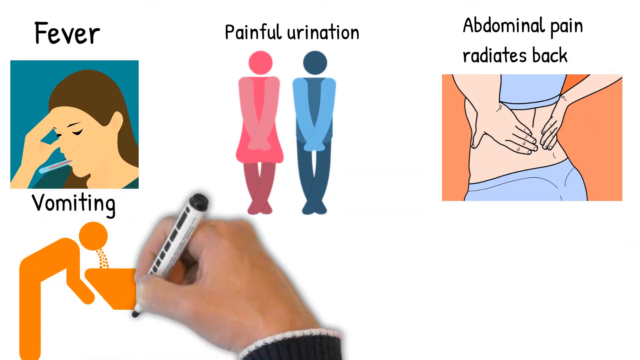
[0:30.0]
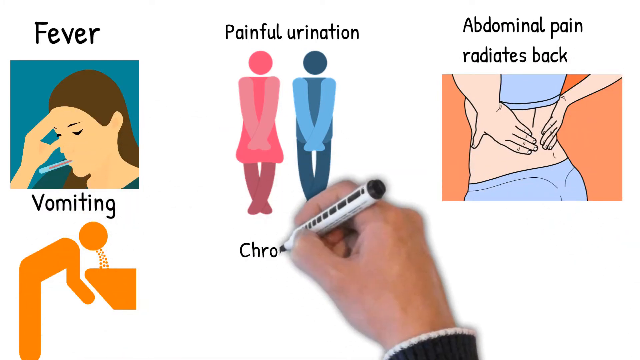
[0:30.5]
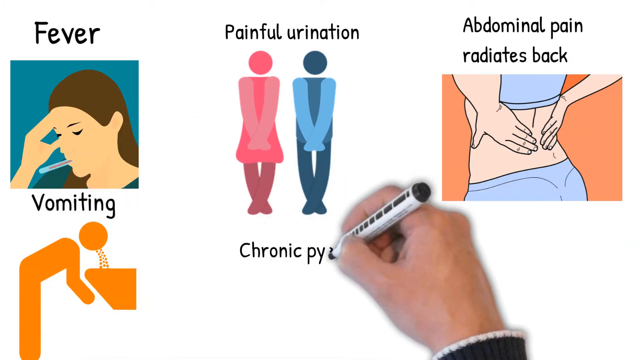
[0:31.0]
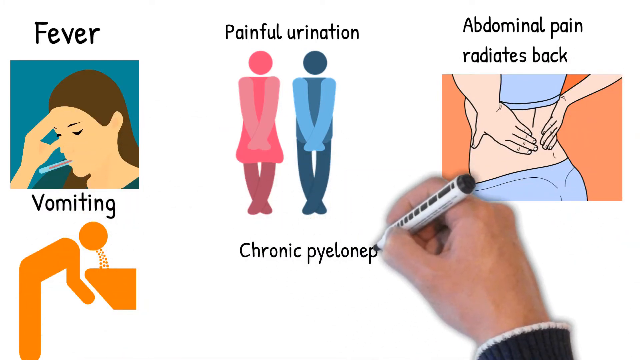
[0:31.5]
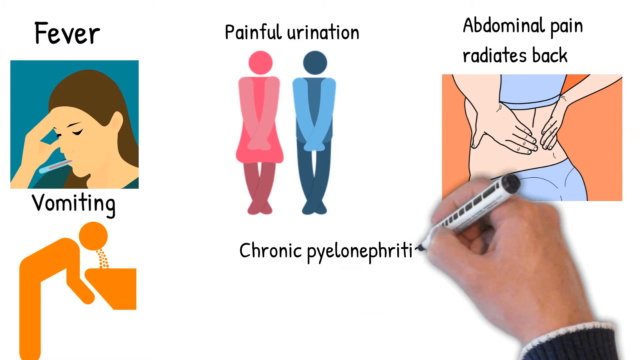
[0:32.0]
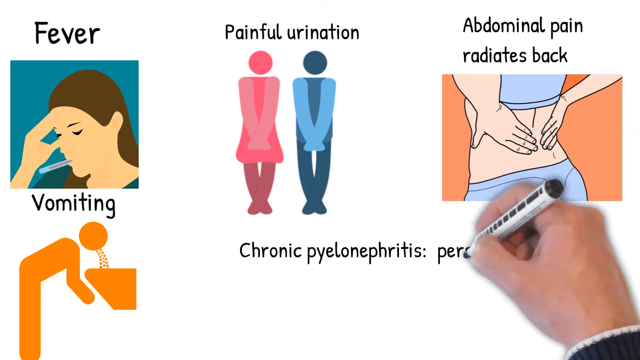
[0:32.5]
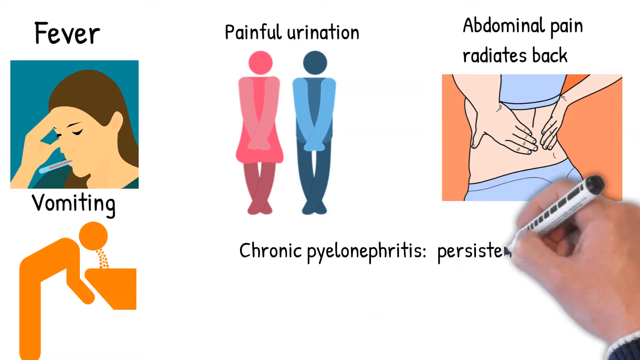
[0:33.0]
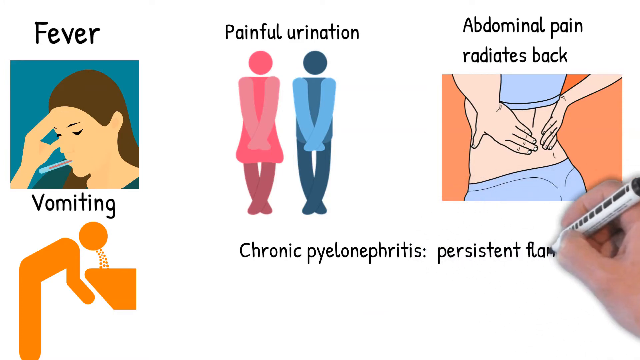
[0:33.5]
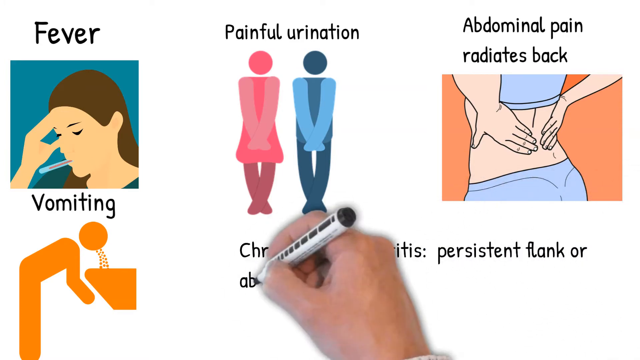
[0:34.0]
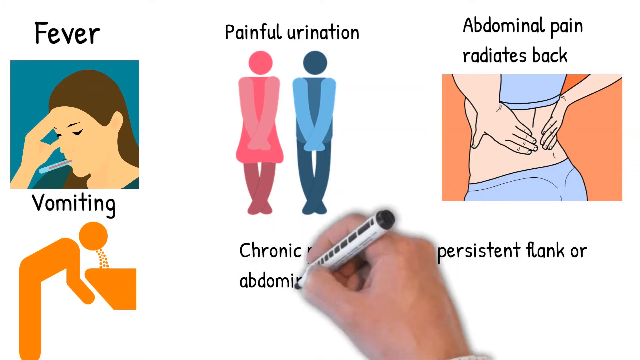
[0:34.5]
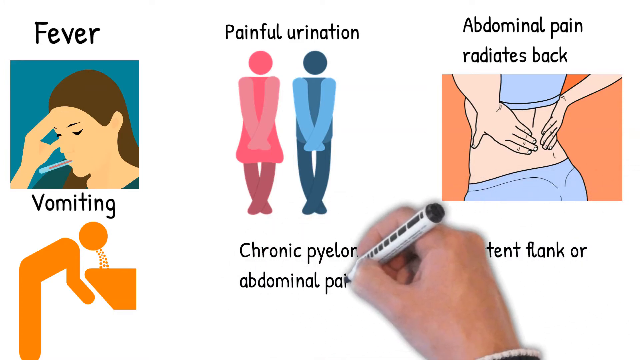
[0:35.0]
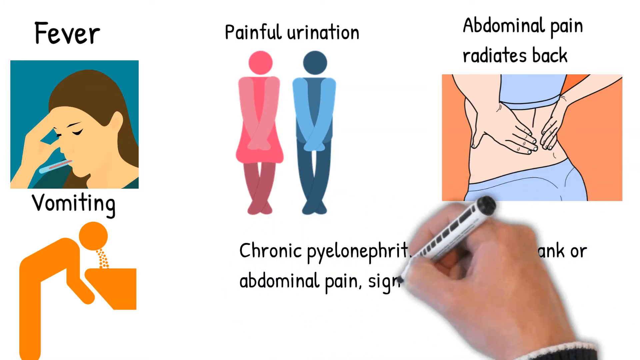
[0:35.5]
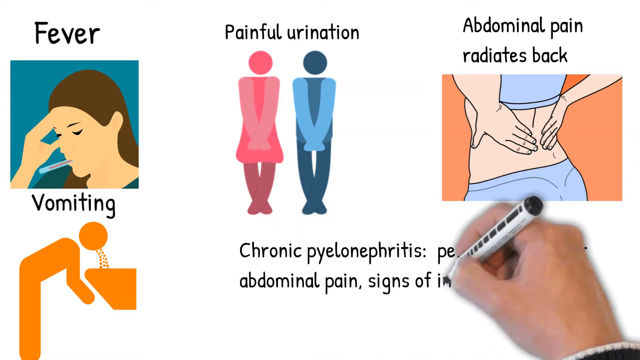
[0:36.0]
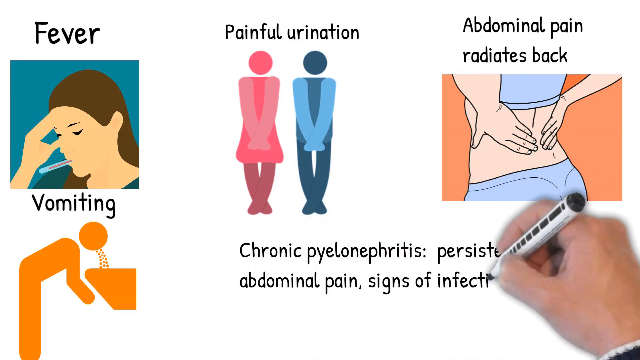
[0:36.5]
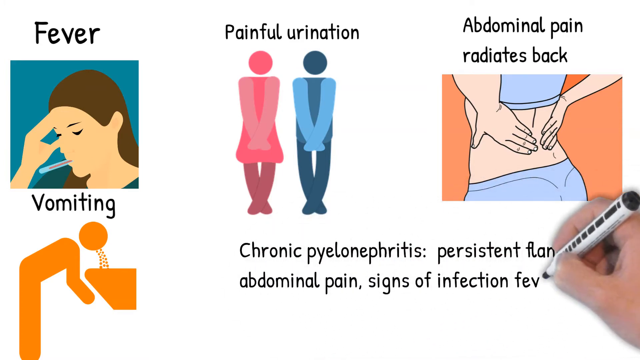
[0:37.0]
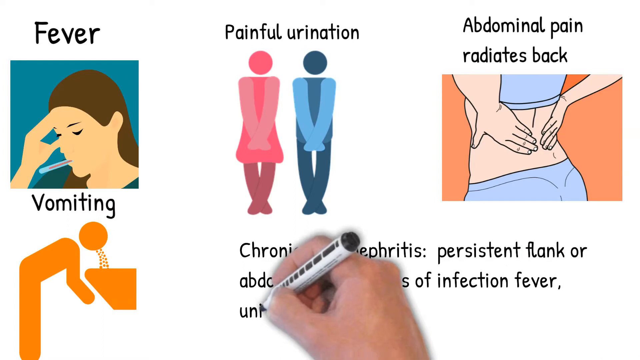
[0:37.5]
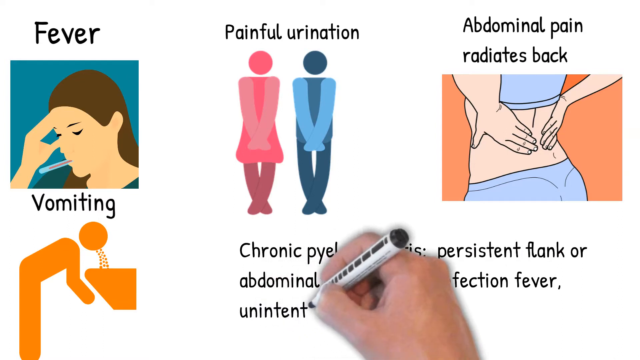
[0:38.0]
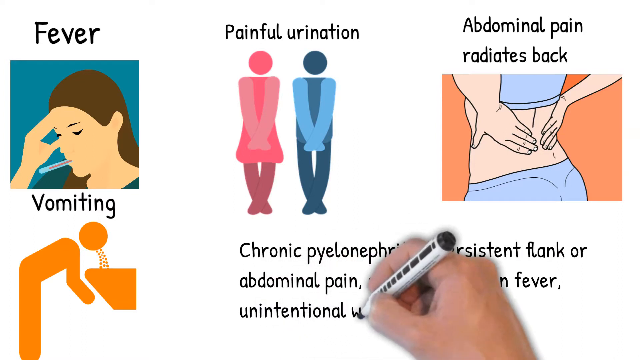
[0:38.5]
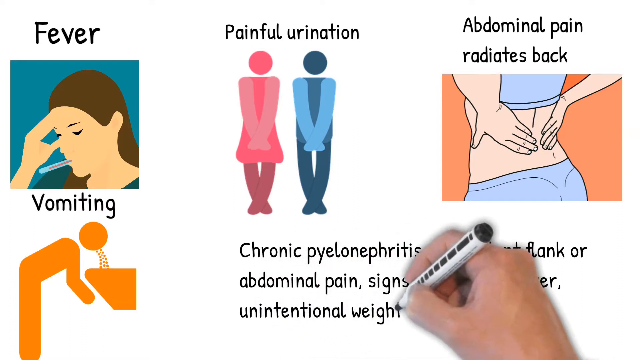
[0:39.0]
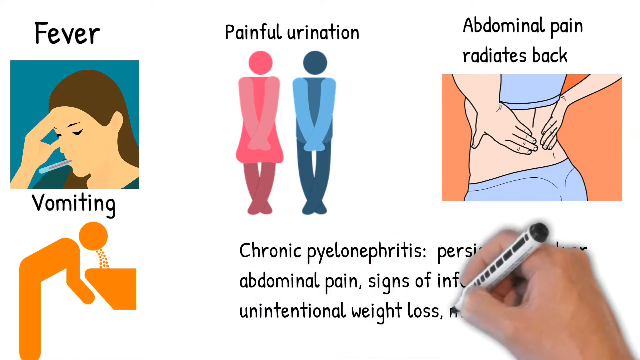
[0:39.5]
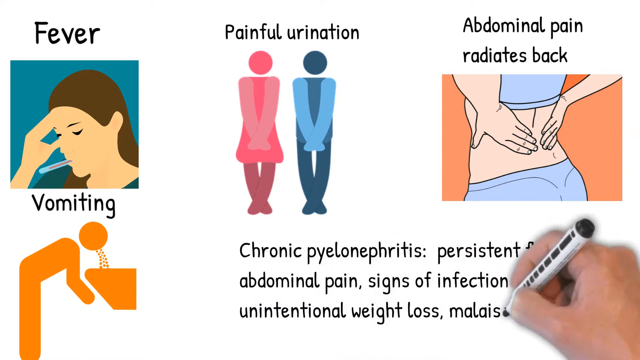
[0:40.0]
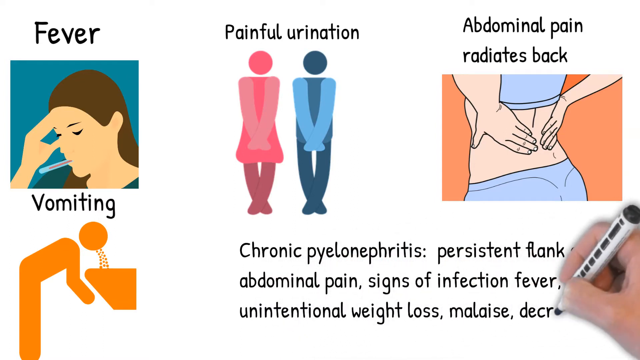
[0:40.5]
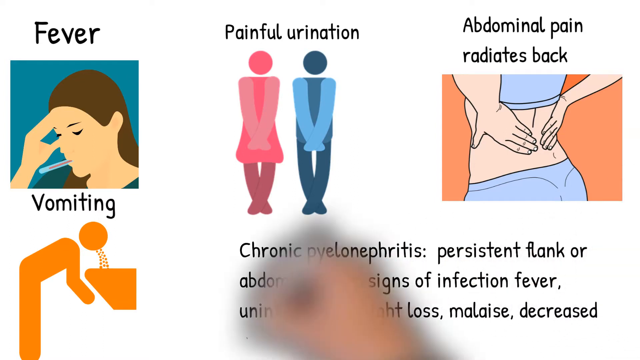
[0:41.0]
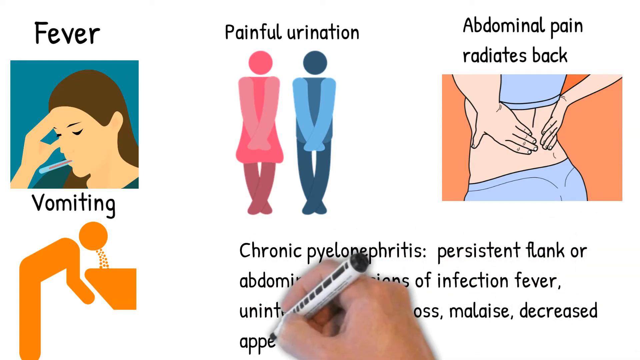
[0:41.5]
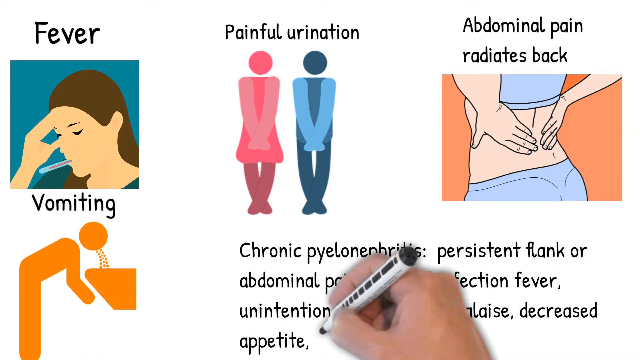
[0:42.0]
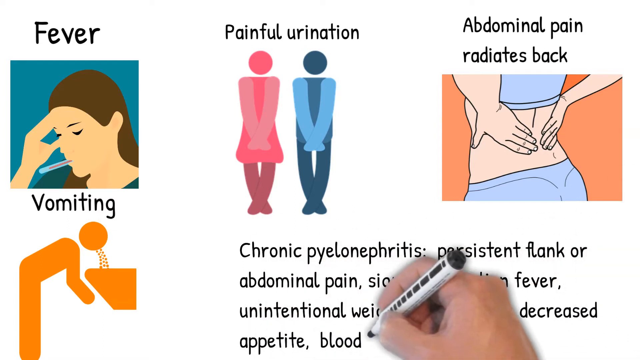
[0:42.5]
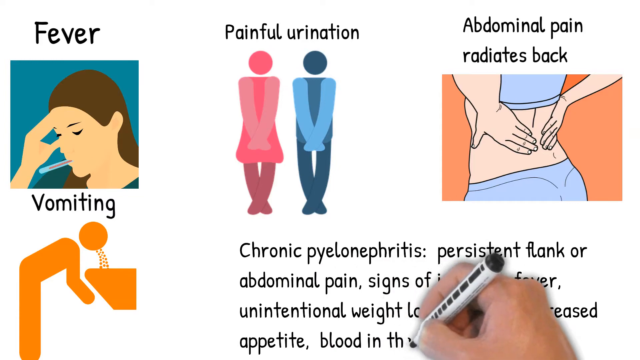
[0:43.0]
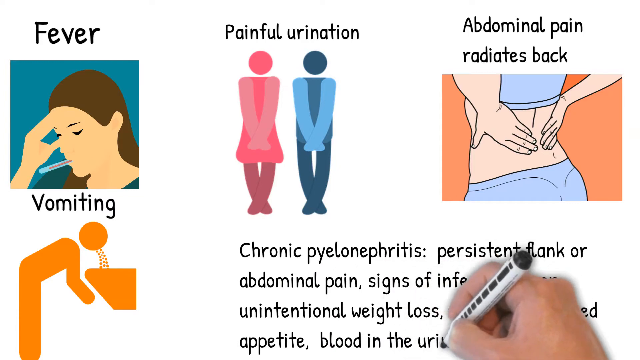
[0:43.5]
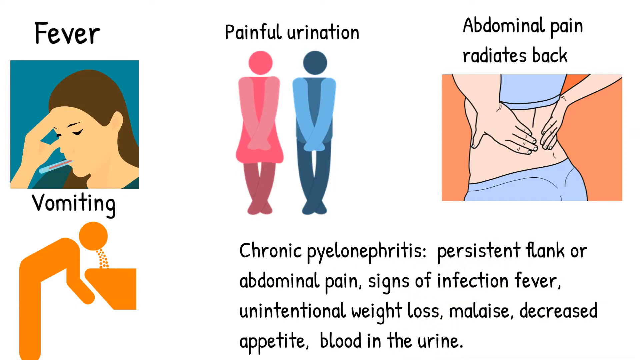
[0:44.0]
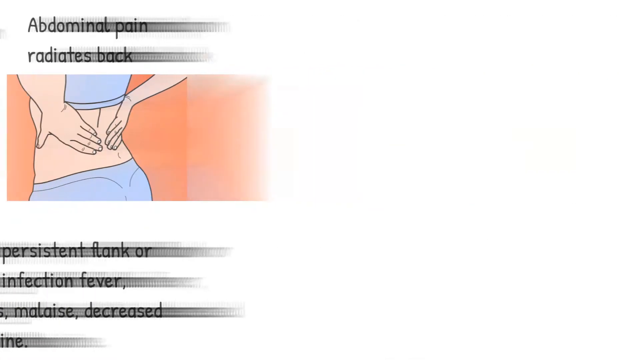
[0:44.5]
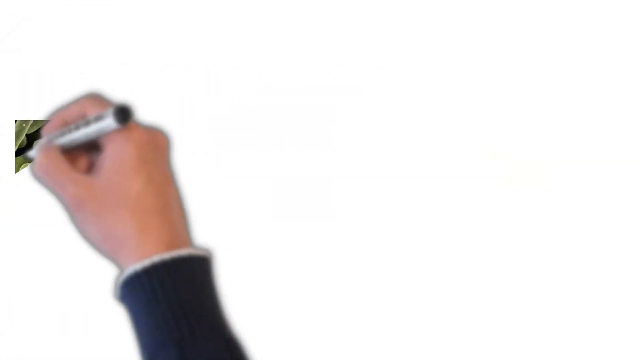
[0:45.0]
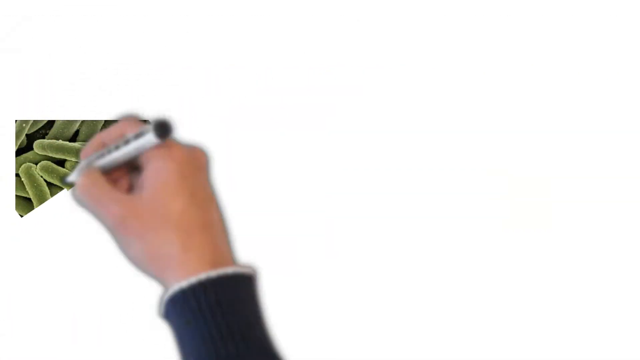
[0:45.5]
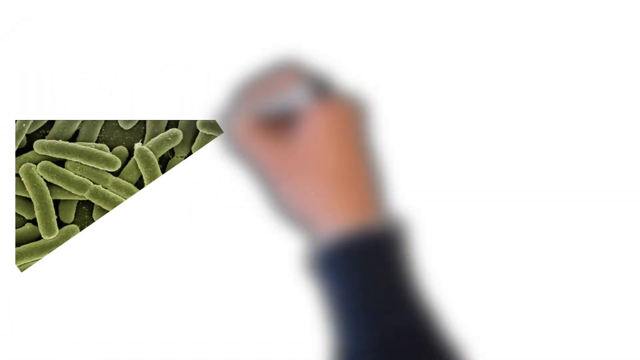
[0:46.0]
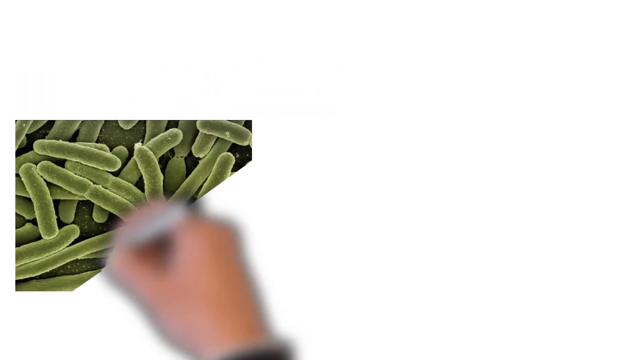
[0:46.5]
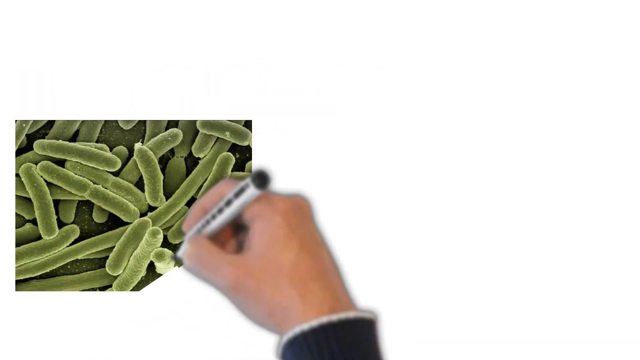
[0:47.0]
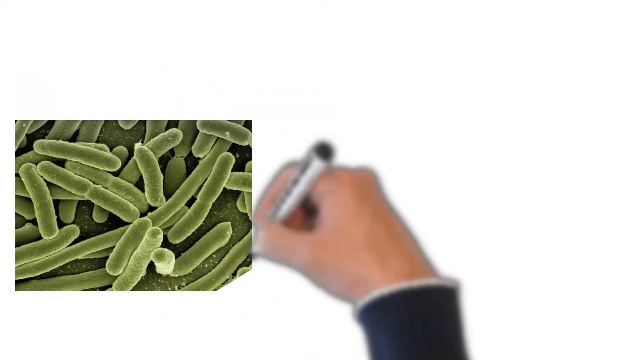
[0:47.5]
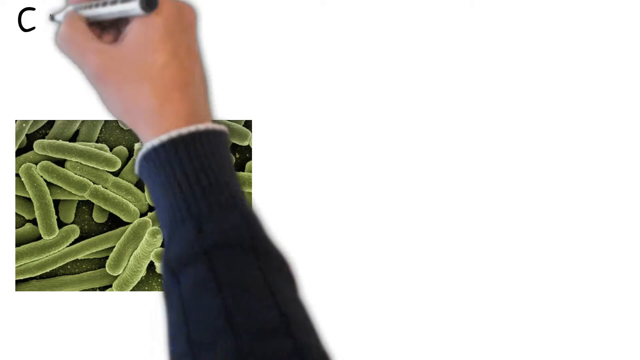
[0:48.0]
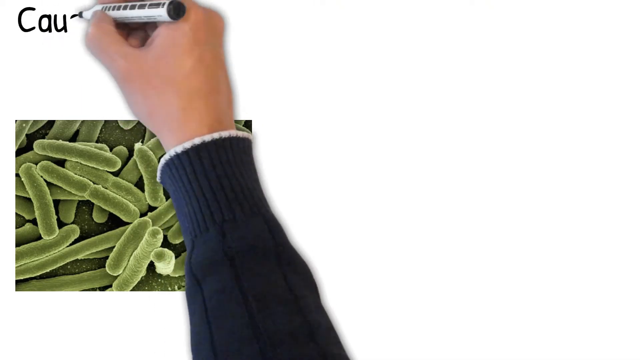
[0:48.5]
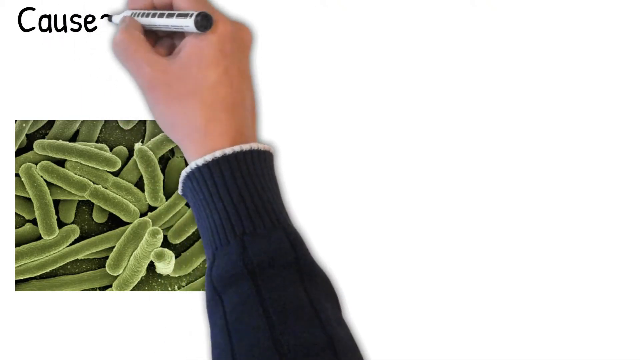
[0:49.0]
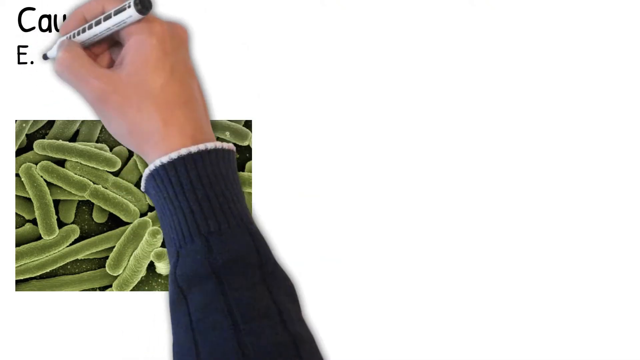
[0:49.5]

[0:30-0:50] Under "fever" there is a picture of a woman with her hand on her forehead; "painful urination" has figures of a man and a woman; "abdominal pain radiates back" shows a woman putting her hands on her back; and in orange a person is shown vomiting into a toilet. The man's hand holds a white marker with black on its side. He continues writing "chronic pyelonephritis", "persistent flank or abdominal pain", "signs of infection", "fever", "unintentional weight loss", "malaise", "decreased appetite", "blood in the urine". The view then switches to a picture of green bacteria, and he writes "causes E. coli" above it.